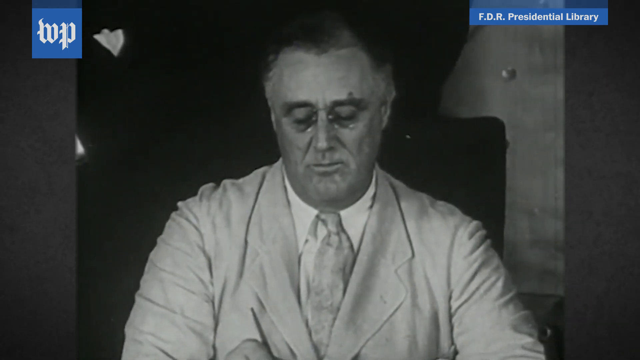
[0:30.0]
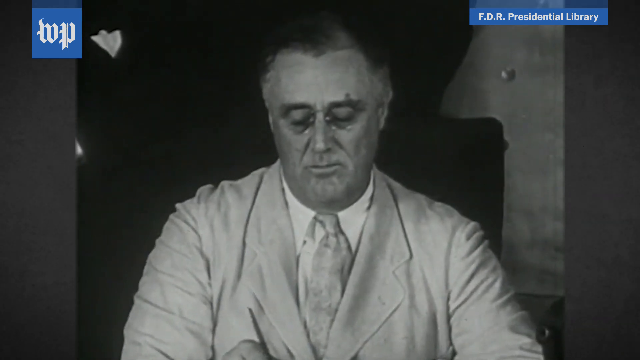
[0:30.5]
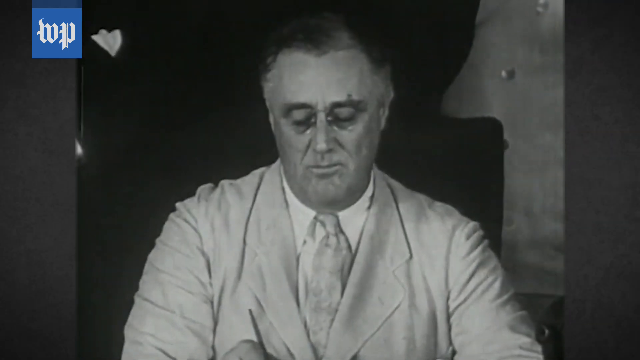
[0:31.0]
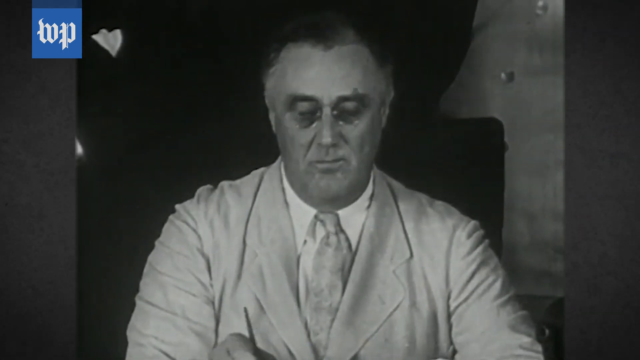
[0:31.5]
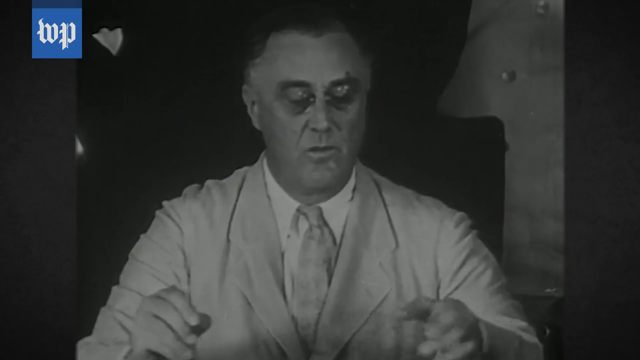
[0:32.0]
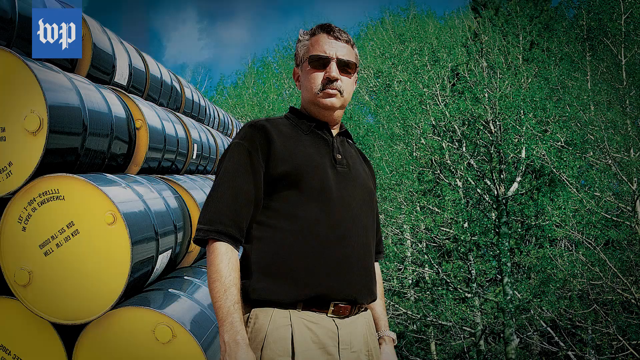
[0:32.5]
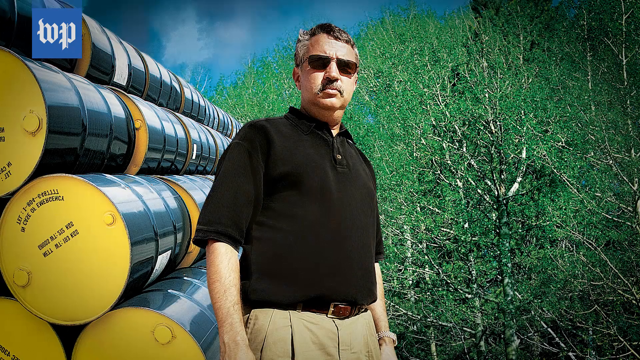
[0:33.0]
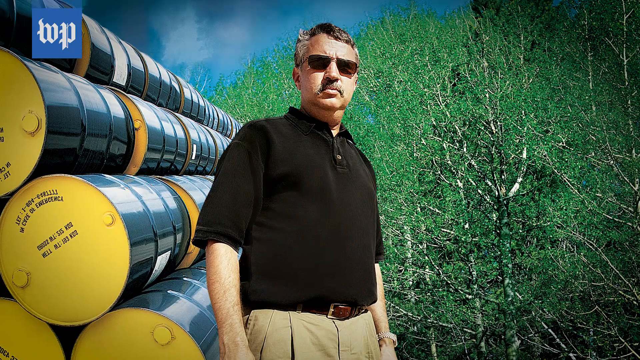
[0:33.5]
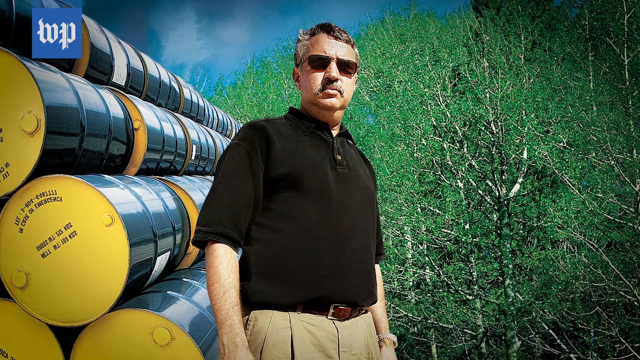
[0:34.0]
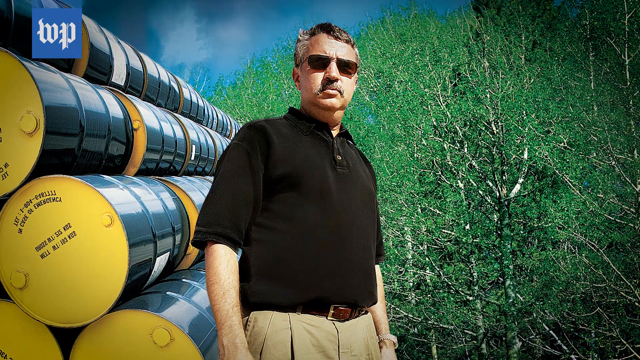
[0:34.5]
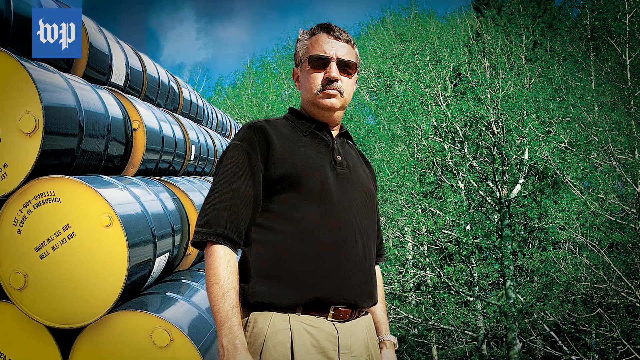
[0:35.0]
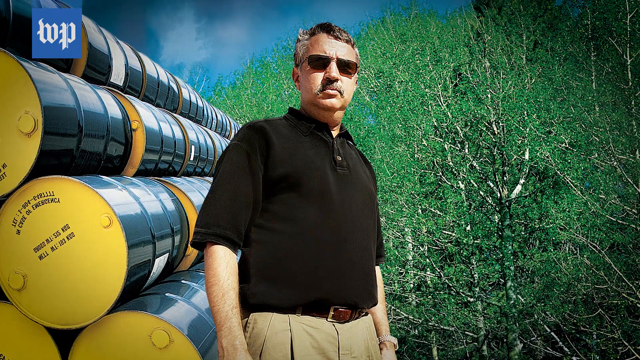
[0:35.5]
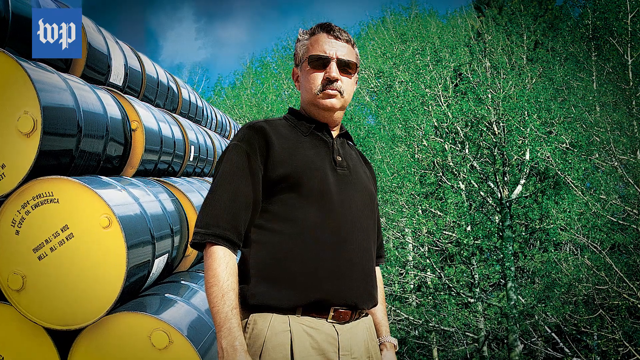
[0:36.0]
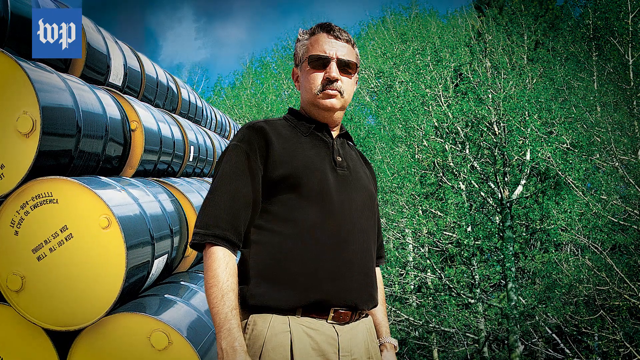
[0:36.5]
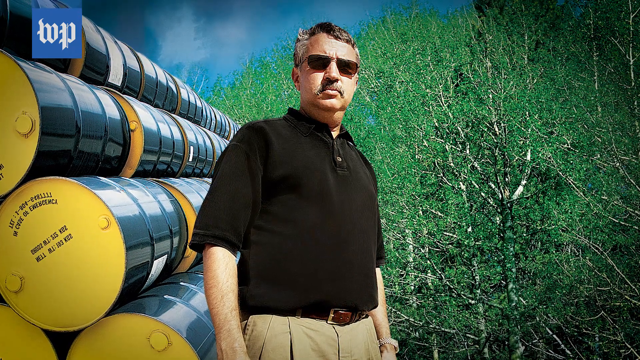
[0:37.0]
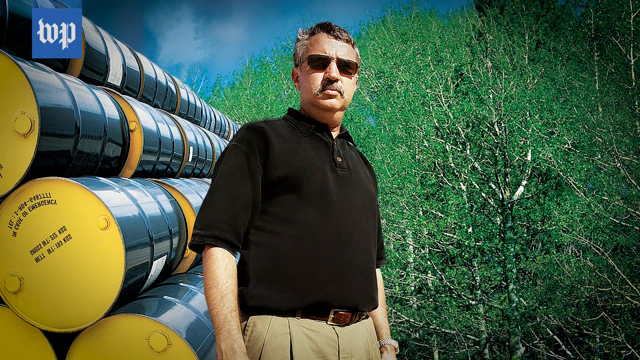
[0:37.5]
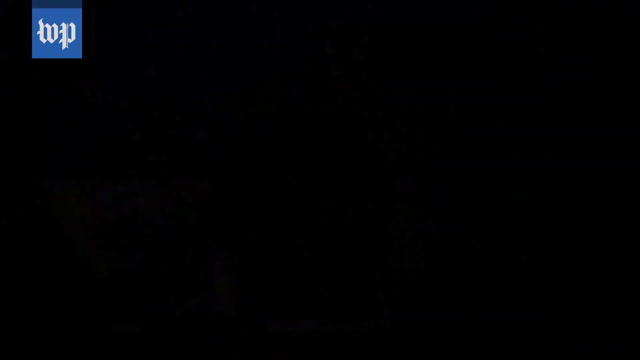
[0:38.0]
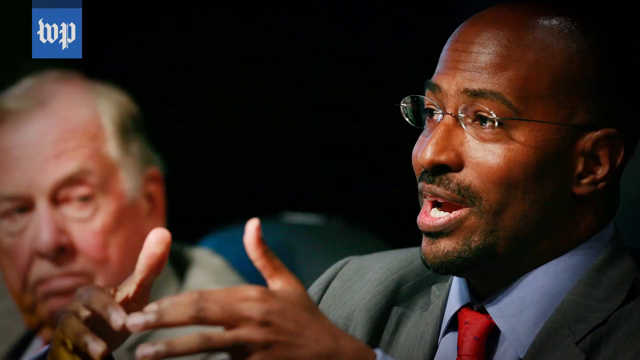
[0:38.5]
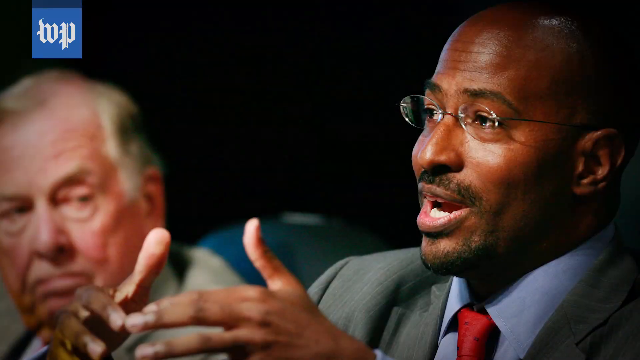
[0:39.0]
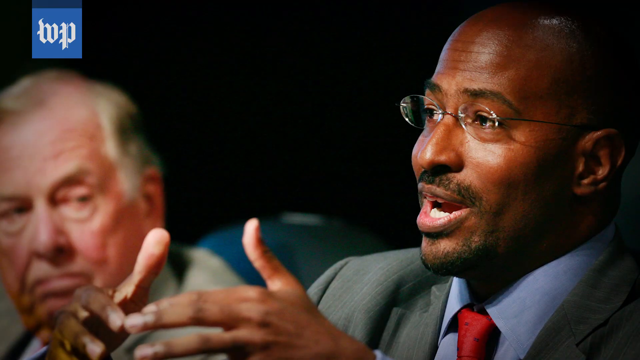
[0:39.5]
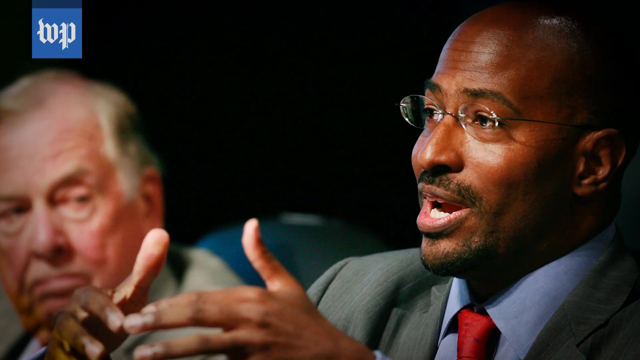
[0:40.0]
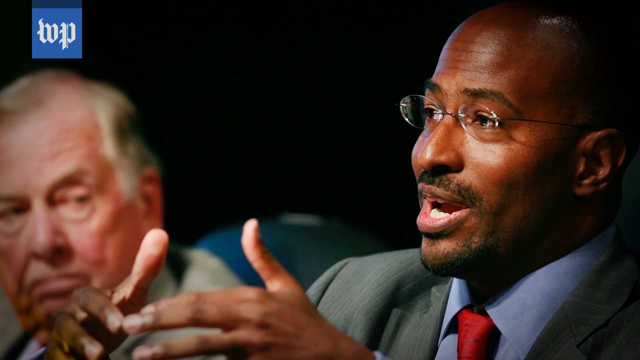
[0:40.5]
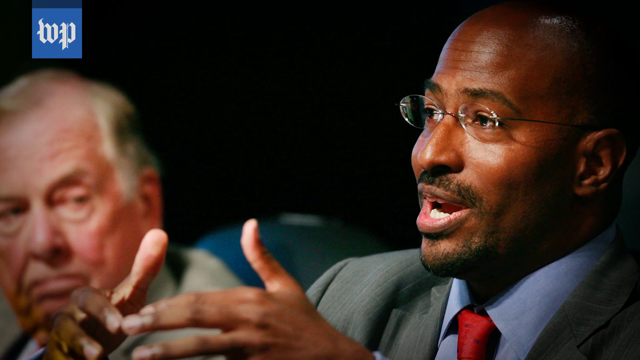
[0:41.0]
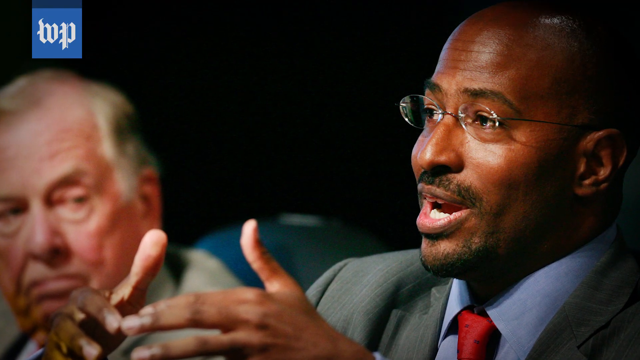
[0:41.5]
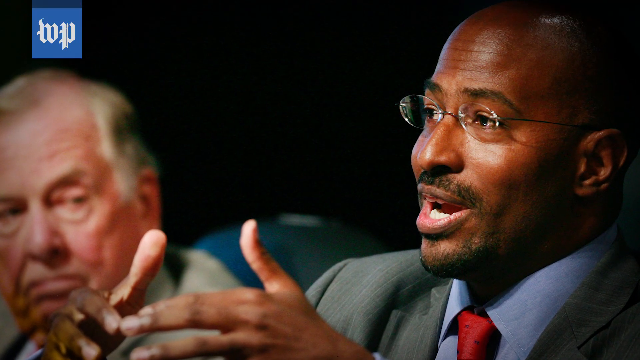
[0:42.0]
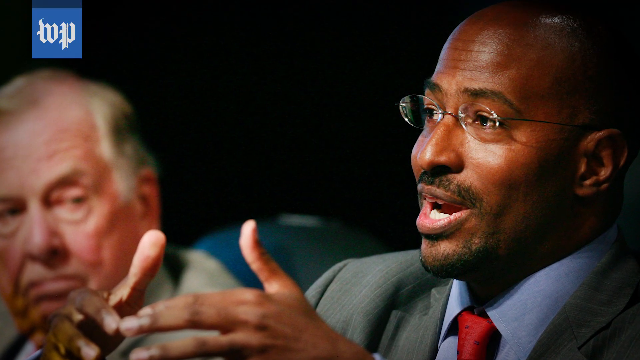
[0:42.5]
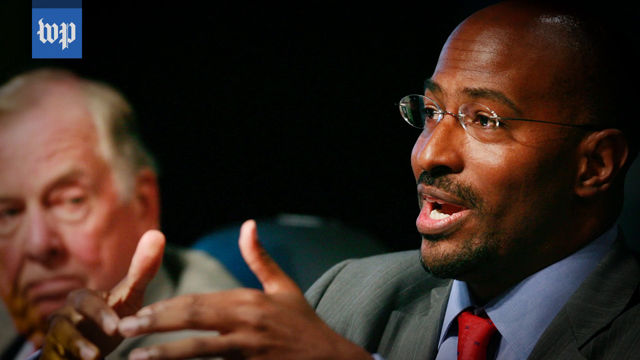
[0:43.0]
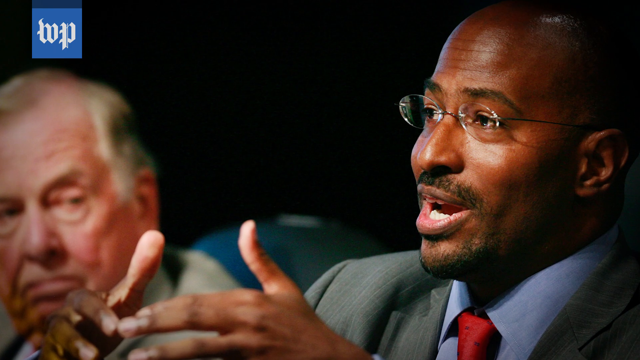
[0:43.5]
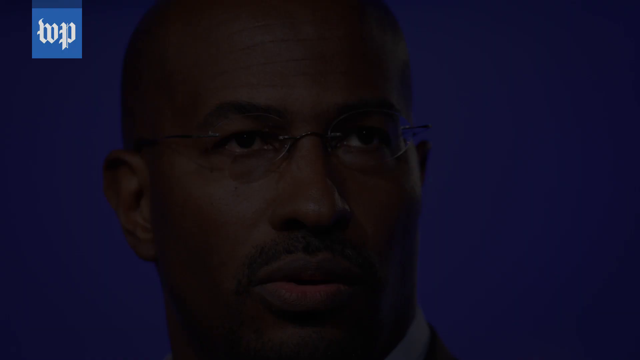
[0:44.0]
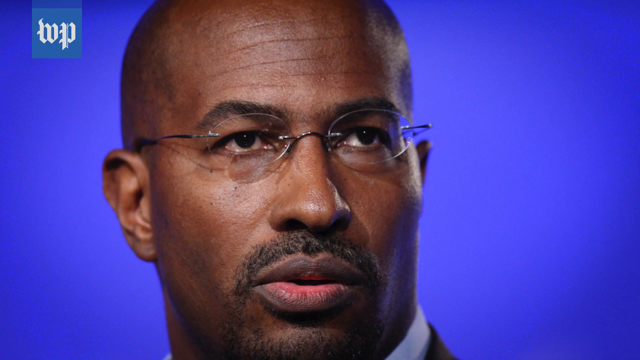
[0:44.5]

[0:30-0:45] The president signs a bill. Afterward, a man with brown skin, a mustache, sunglasses and a receding hairline, wearing a black polo and cargo pants, stands behind trees and some toxic waste. Next, an African American man with glasses and facial hair, possibly a legislator or senator, seems to be giving a speech, gesturing with his hands, while an old white man on his right side-eyes him. A picture of the same black man follows, in which his expression seems pretty serious.